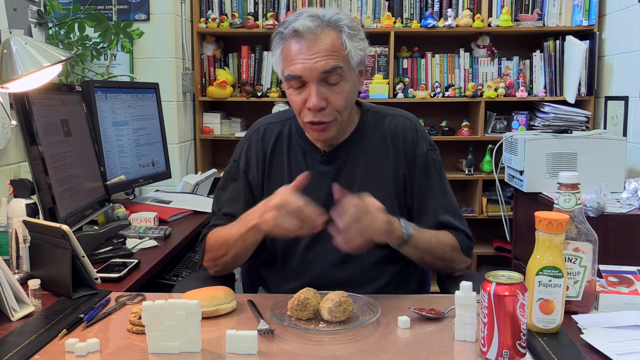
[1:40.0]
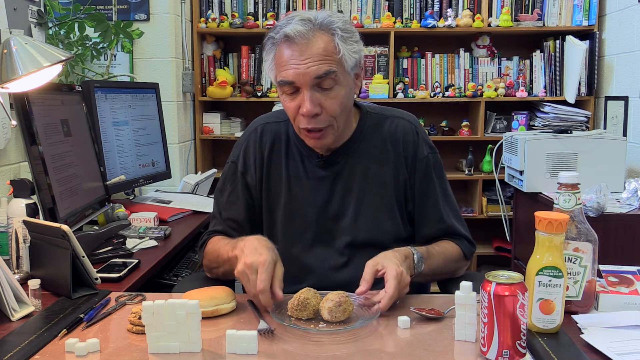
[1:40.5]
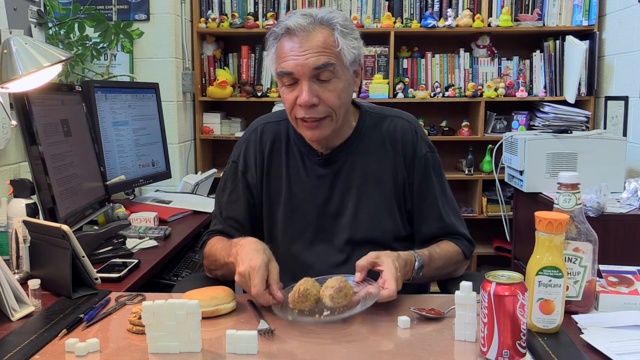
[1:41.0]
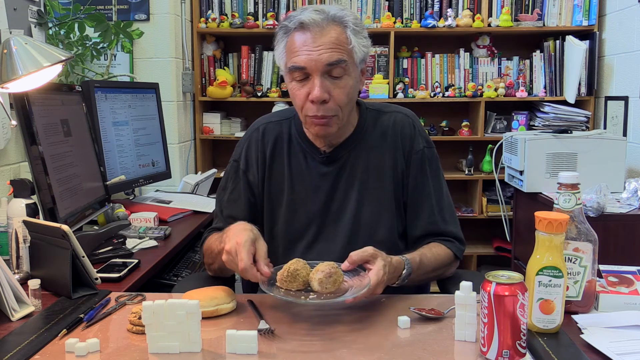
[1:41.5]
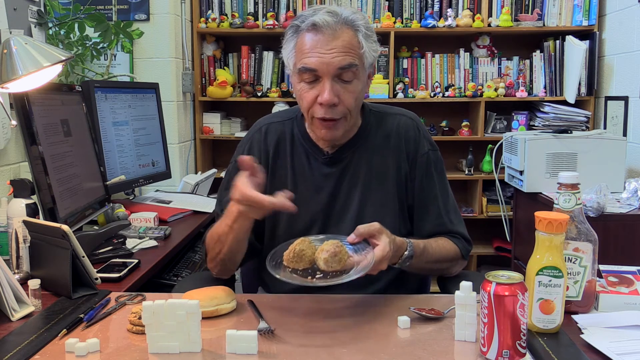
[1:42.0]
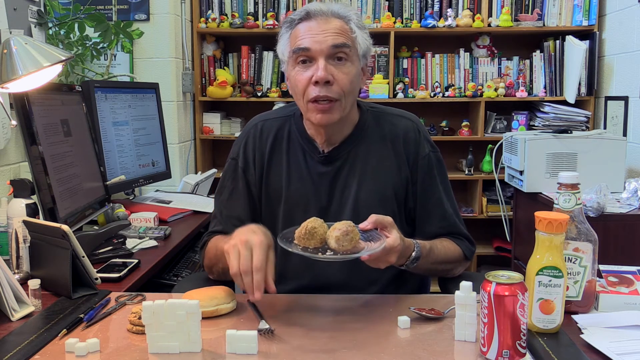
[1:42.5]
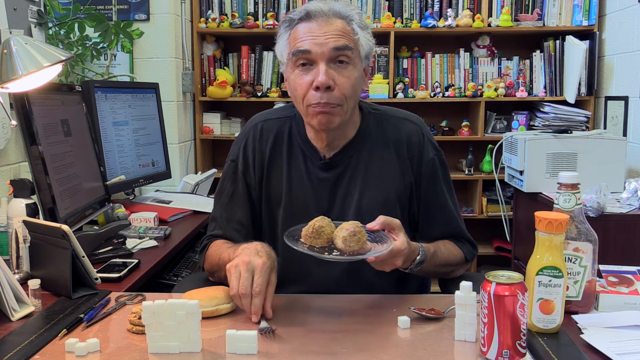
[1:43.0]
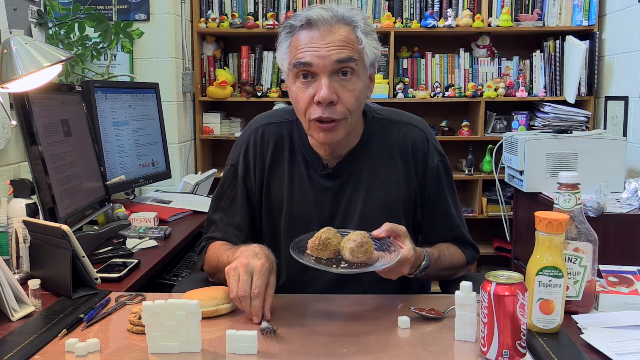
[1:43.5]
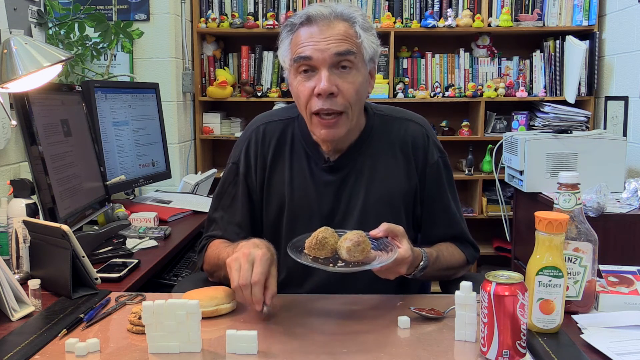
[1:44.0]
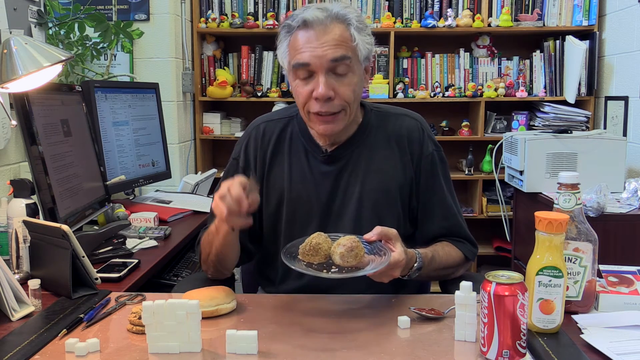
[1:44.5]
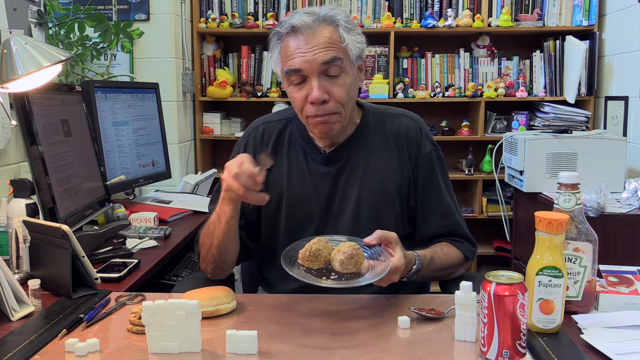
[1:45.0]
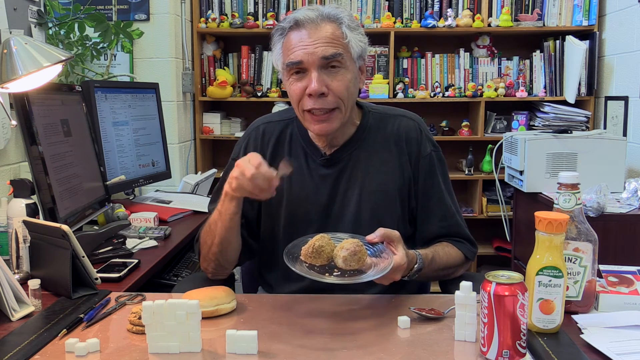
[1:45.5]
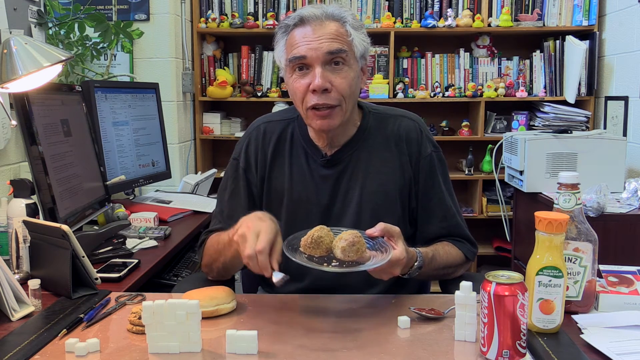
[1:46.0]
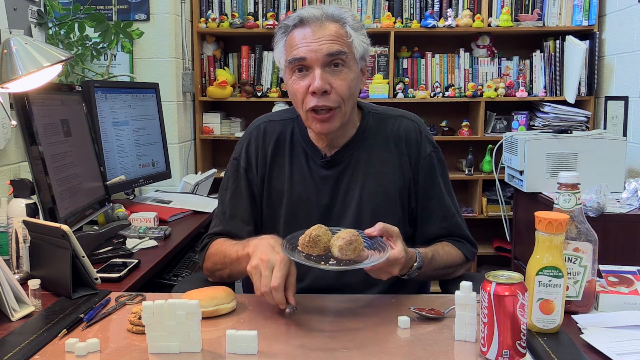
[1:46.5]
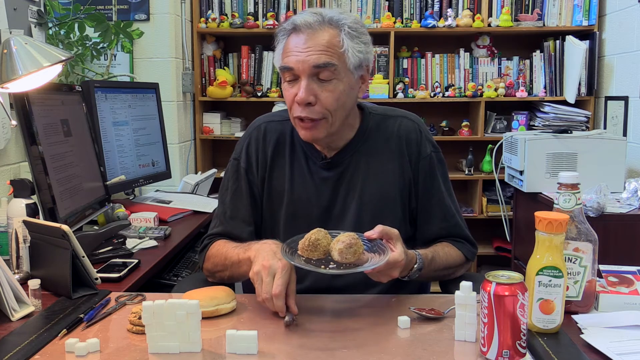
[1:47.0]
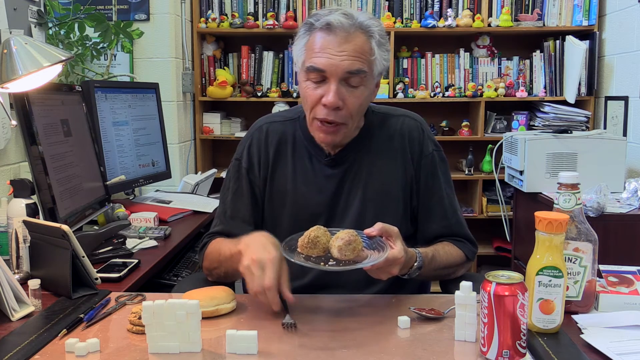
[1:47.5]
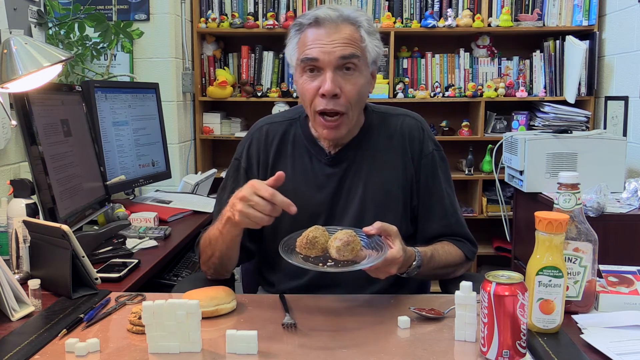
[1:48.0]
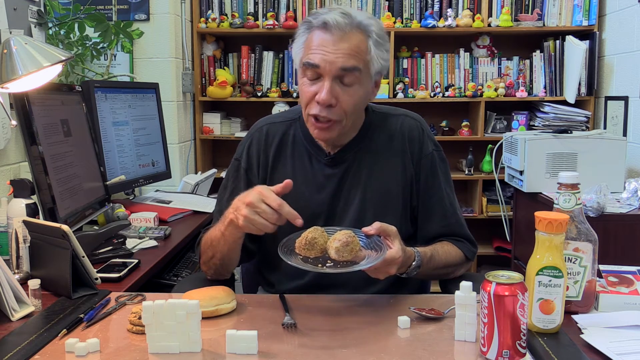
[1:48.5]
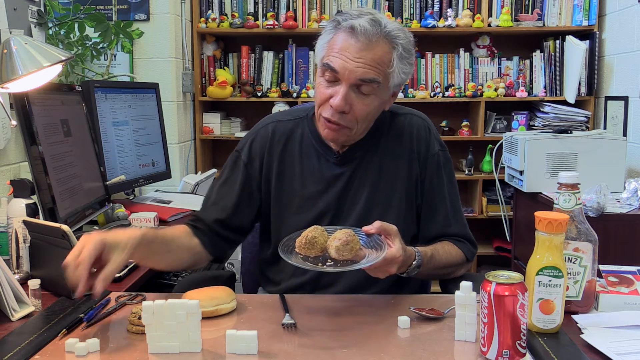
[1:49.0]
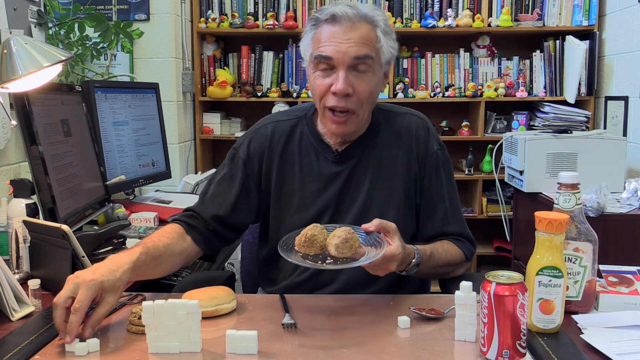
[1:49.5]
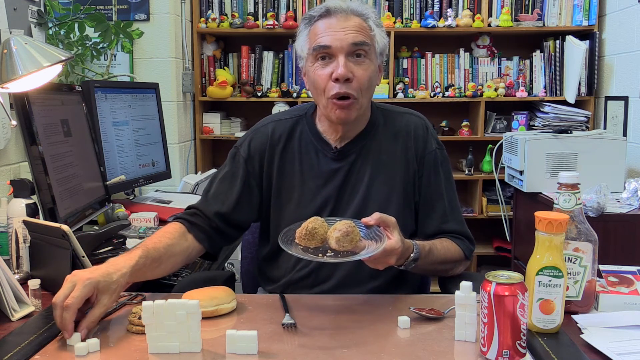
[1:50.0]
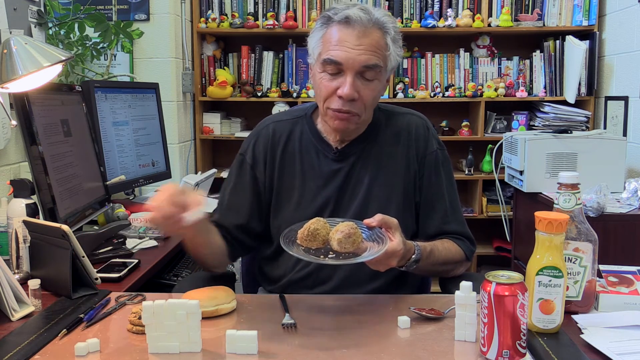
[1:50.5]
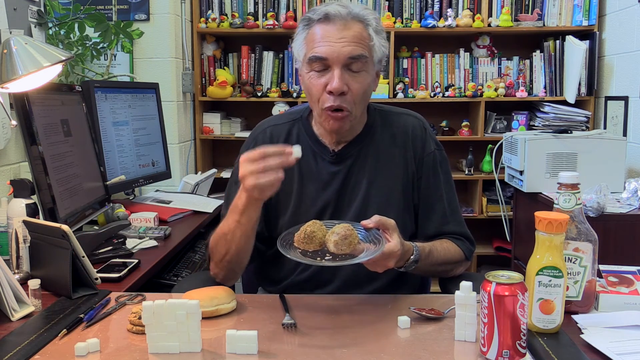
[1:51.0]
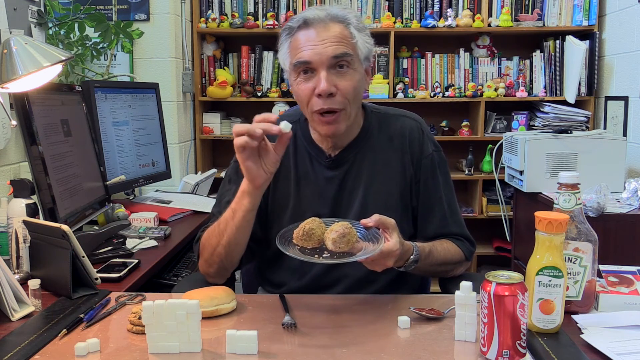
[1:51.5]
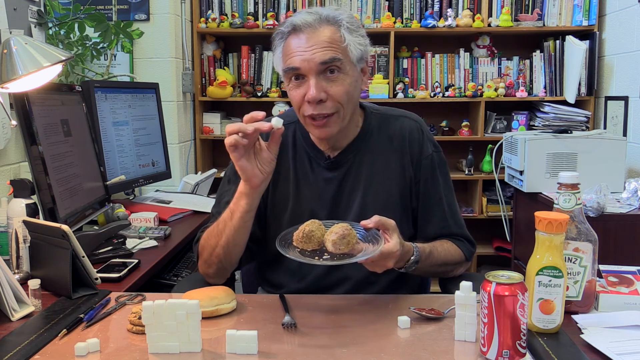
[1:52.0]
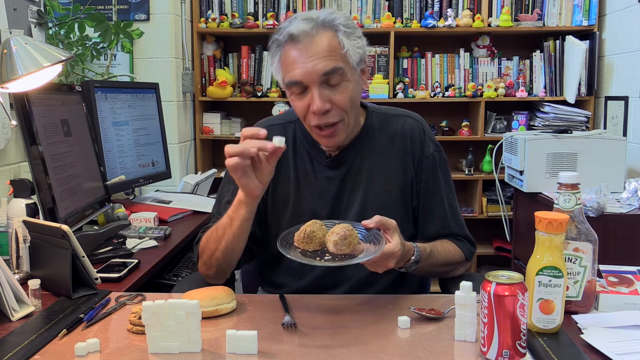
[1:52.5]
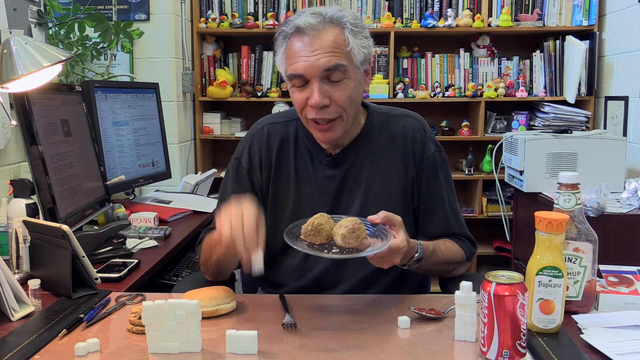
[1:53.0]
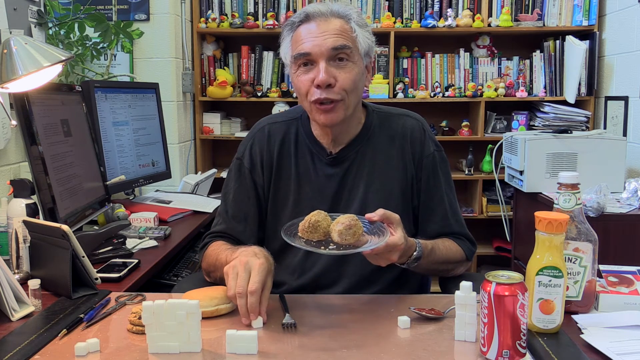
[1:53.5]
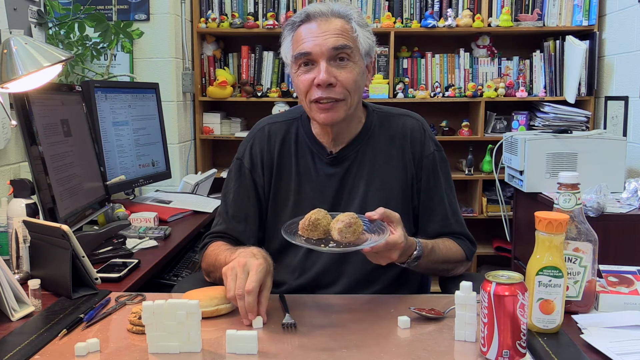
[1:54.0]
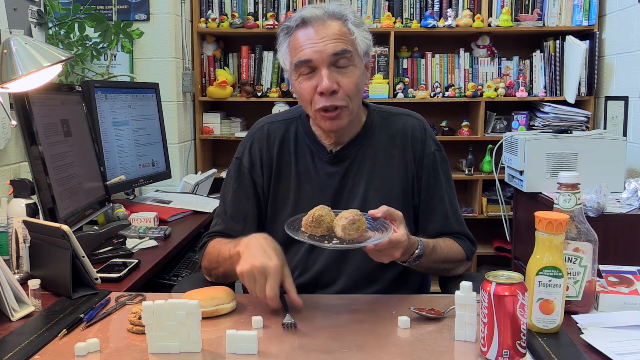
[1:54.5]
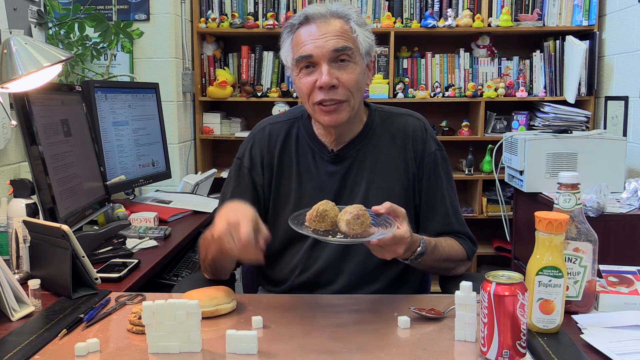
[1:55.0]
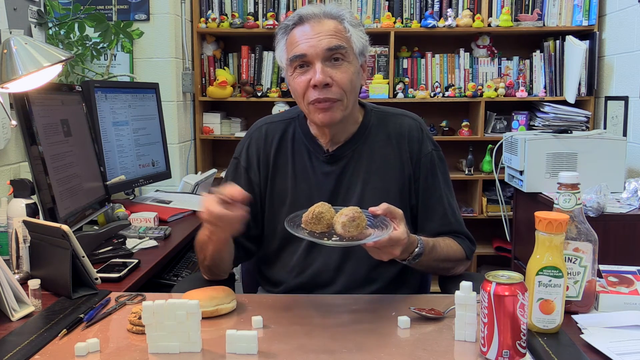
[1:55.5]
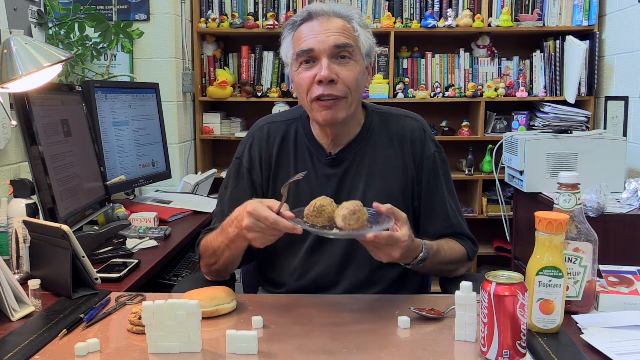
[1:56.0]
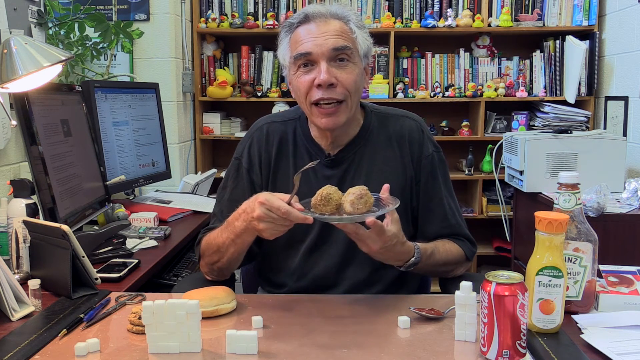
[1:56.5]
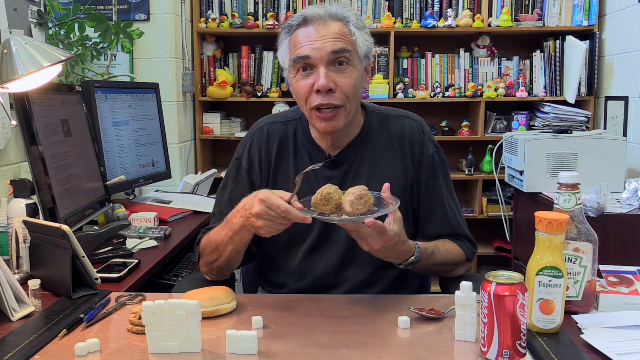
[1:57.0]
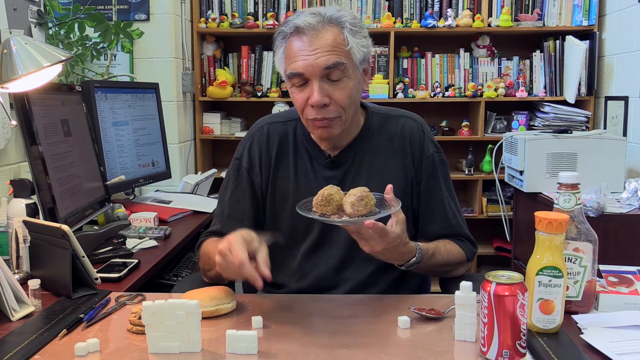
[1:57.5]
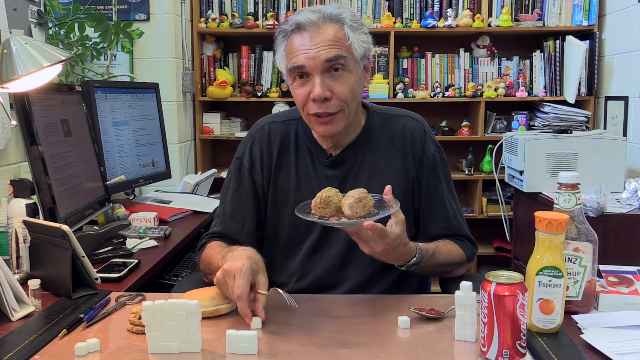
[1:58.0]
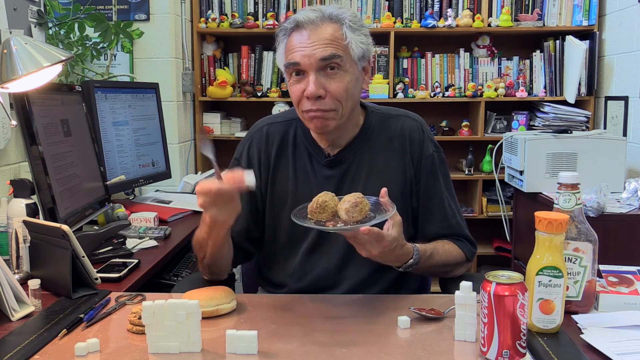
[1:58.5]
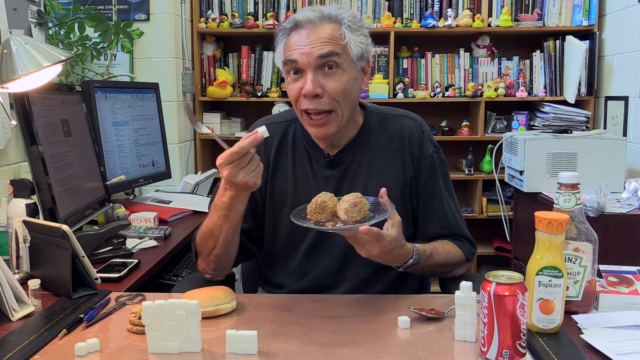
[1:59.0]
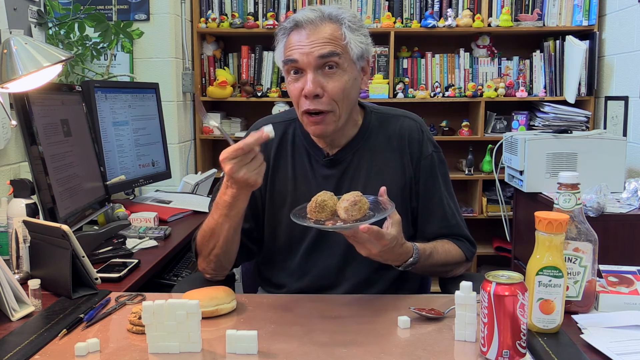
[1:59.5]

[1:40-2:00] A large bookcase fills the man's whole office space. There are two computer screens, what appears to be a tablet on a stand, and a phone laying on the desk, along with a light over the desk and several papers laying there. Several rubber duckies are in the background, most of them yellow, with a green one as well. Several food items are in front of him, and he appears to be showing how much sugar is in each one, describing them expressively. The first shot shows stacks of sugar cubes, a hamburger bun, two cookies, a fork, a clear plate with two balls of some type of food, what appears to be some type of chocolate pudding, a Coca-Cola can, a Tropicana orange juice bottle, and a Heinz bottle. The man picks up the clear plate with the two balls on it, picks up a fork and just holds it there, and points toward it. Then he picks up one cube of sugar and holds it in the air above the two balls of food on the plate. He picks up a fork while looking at the viewer, picks the sugar up again, and then puts it down.